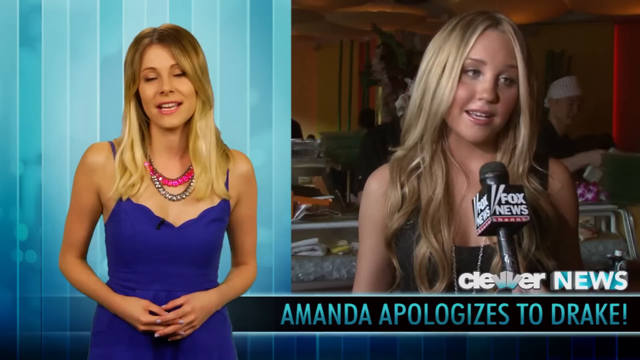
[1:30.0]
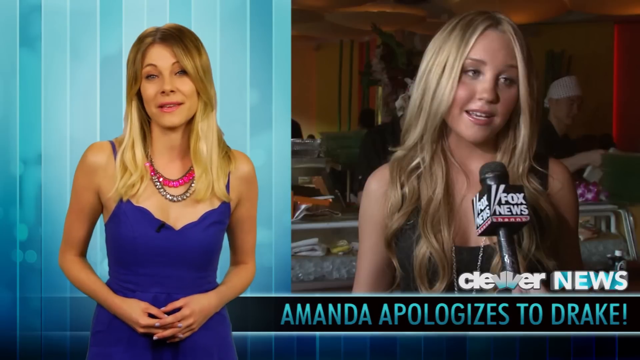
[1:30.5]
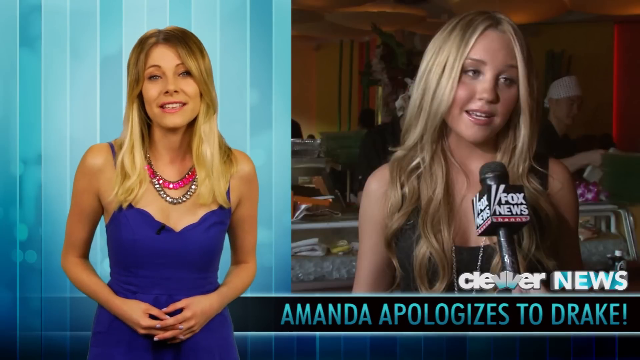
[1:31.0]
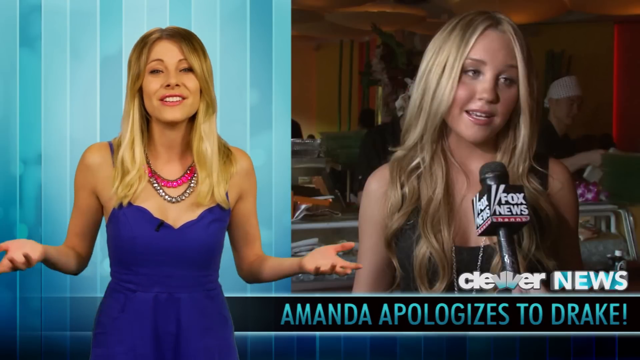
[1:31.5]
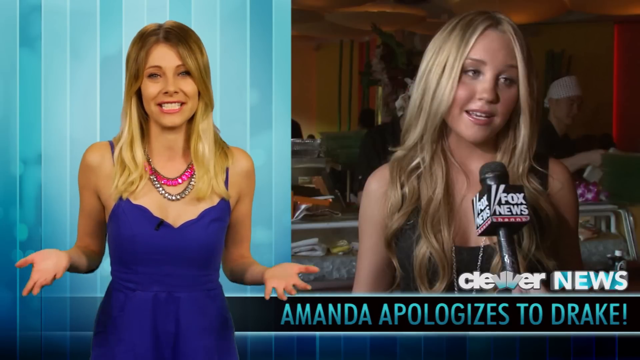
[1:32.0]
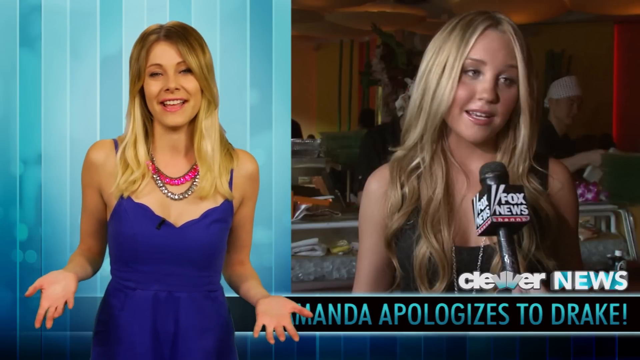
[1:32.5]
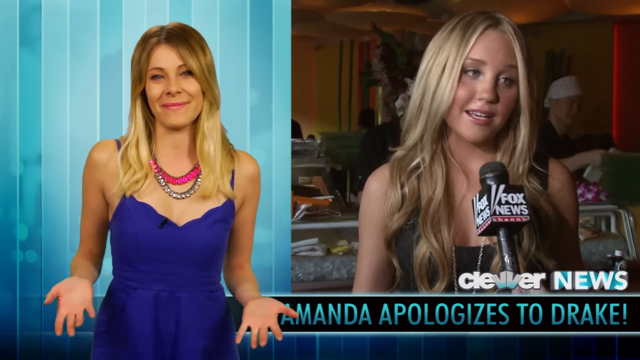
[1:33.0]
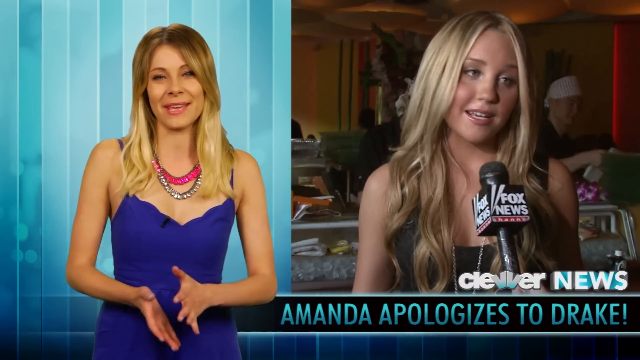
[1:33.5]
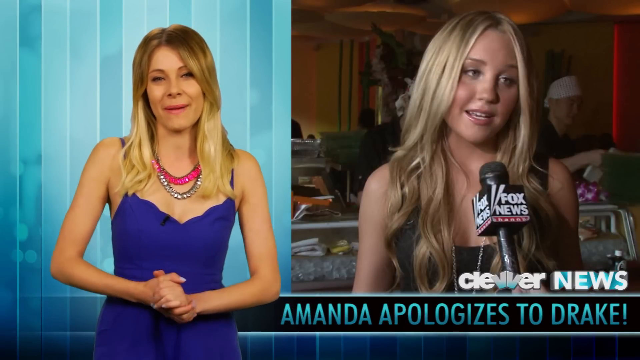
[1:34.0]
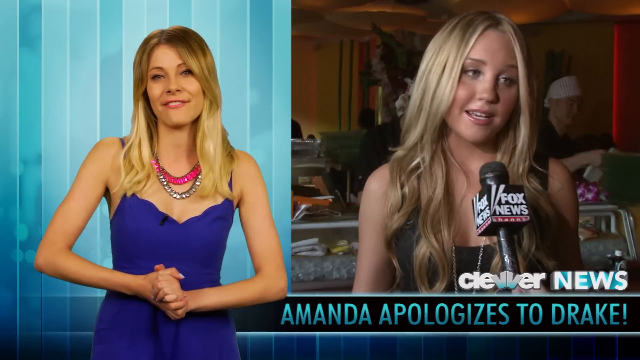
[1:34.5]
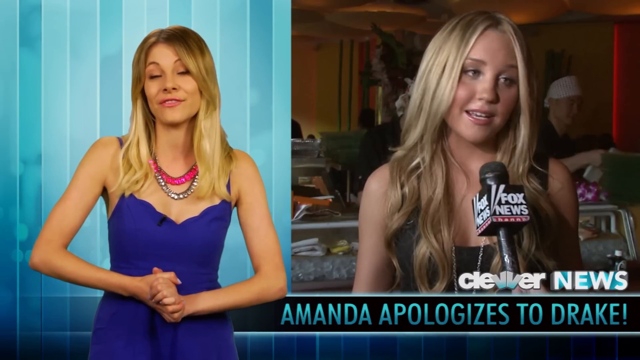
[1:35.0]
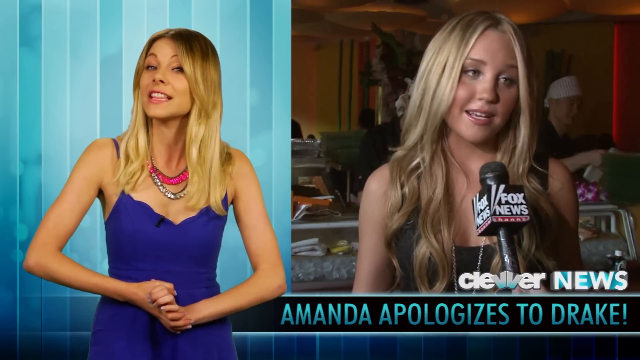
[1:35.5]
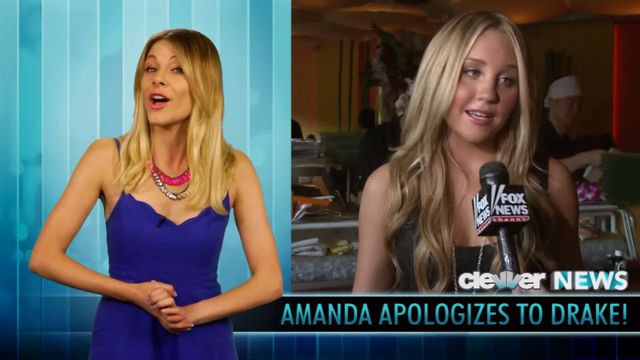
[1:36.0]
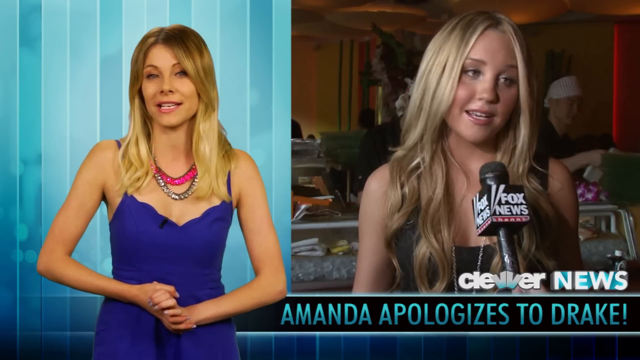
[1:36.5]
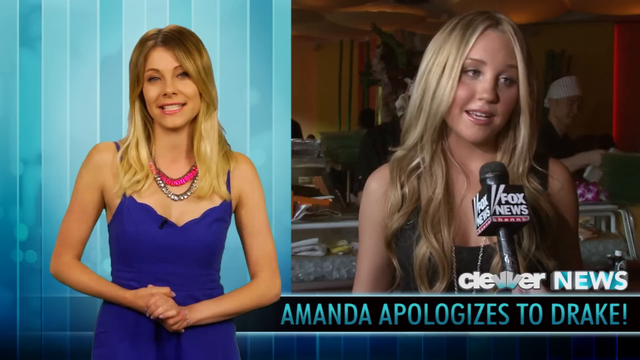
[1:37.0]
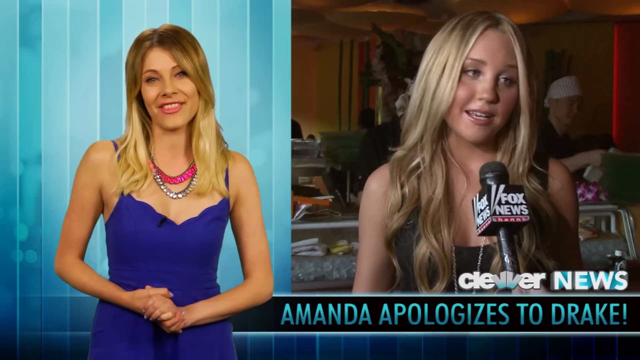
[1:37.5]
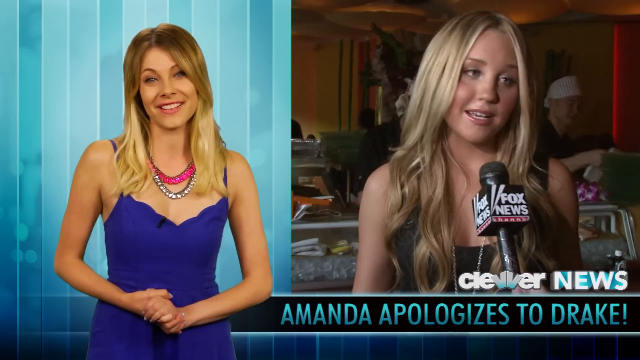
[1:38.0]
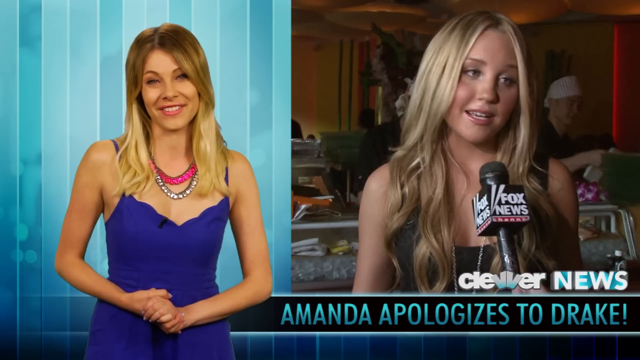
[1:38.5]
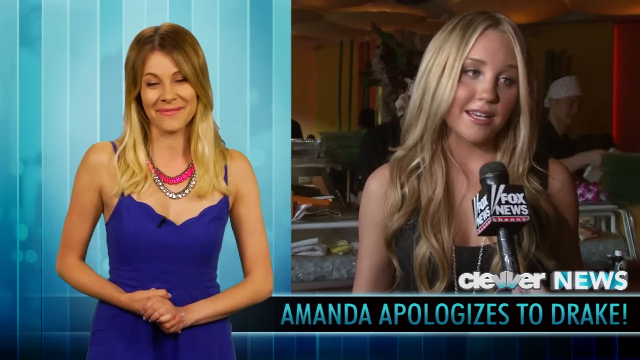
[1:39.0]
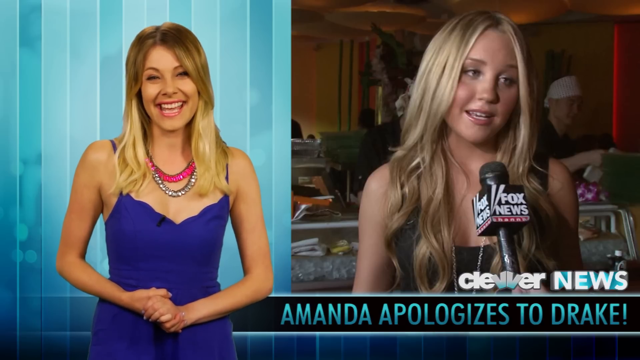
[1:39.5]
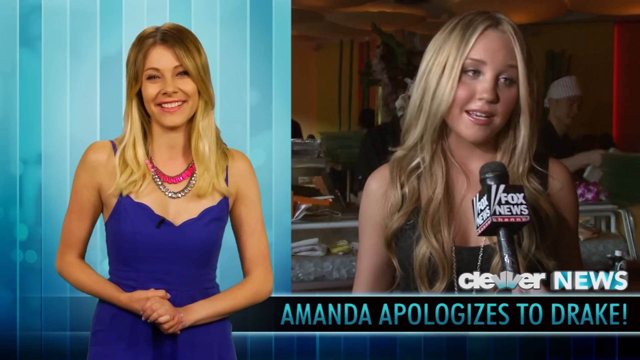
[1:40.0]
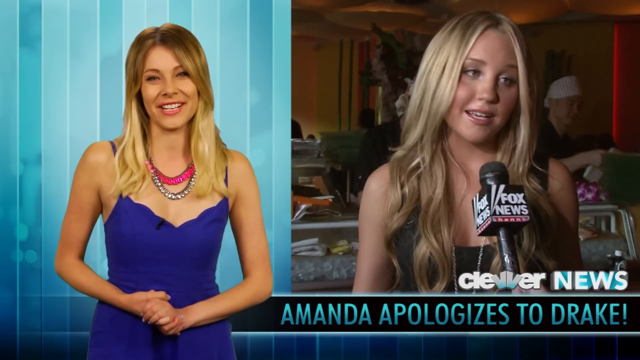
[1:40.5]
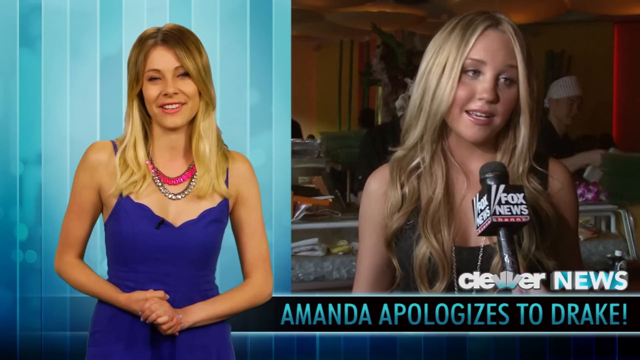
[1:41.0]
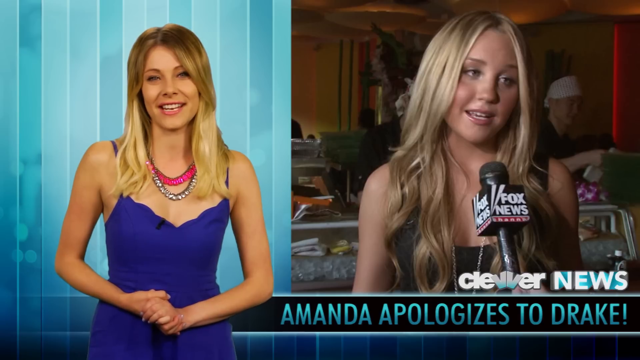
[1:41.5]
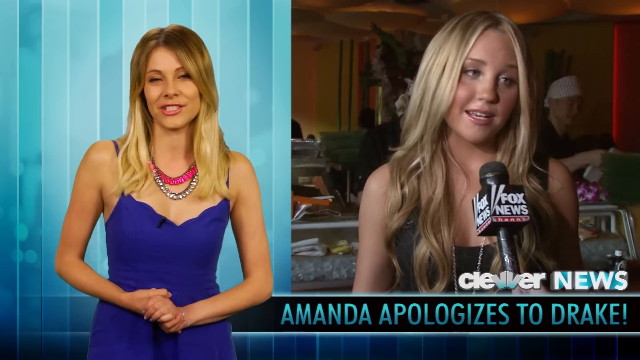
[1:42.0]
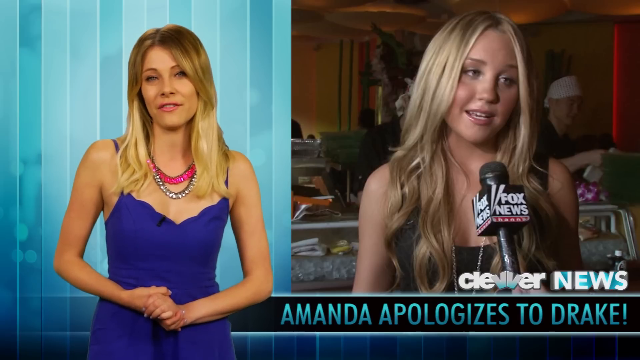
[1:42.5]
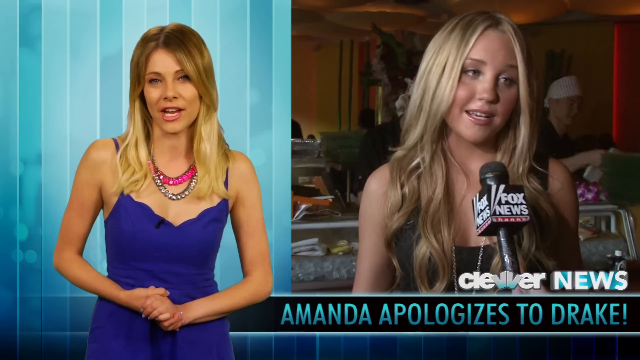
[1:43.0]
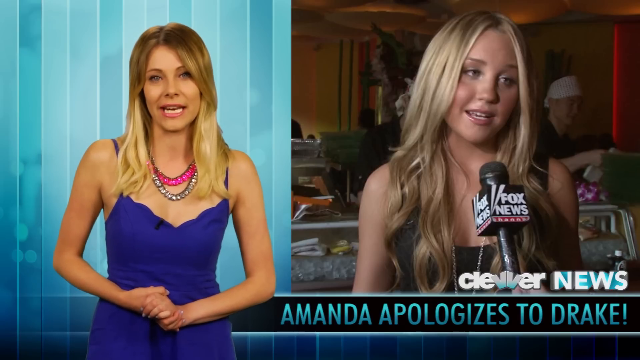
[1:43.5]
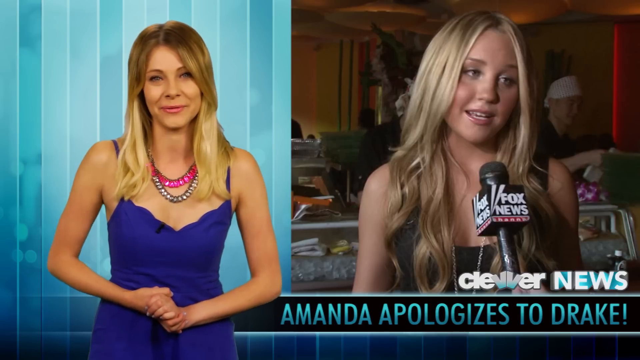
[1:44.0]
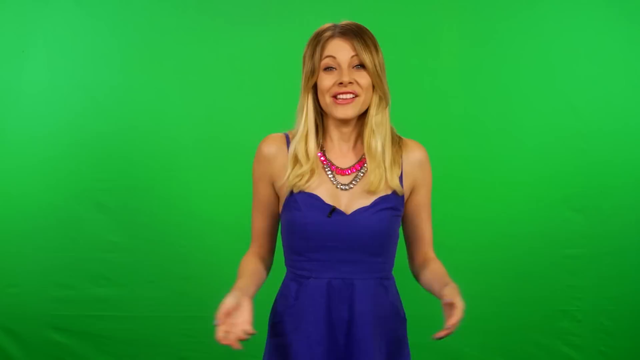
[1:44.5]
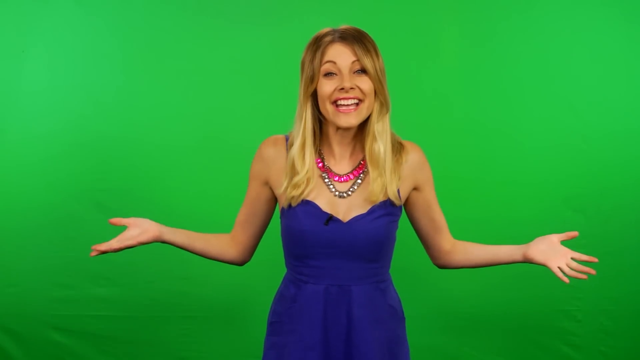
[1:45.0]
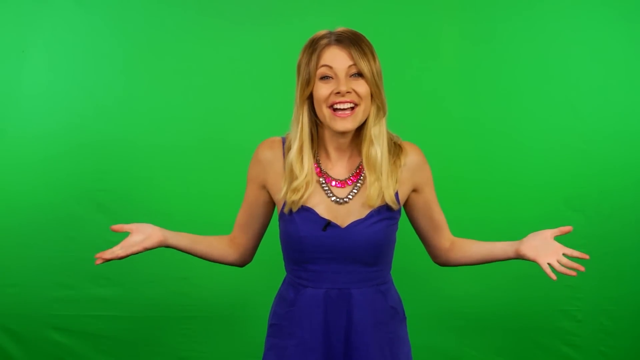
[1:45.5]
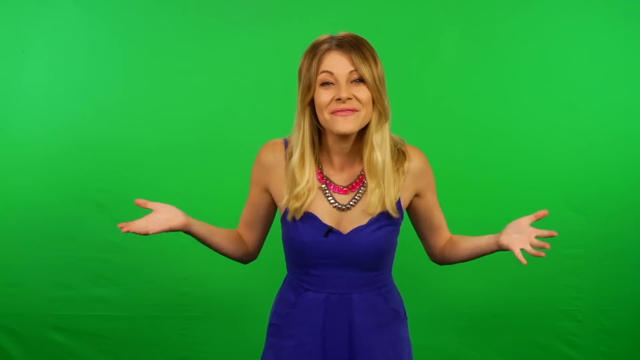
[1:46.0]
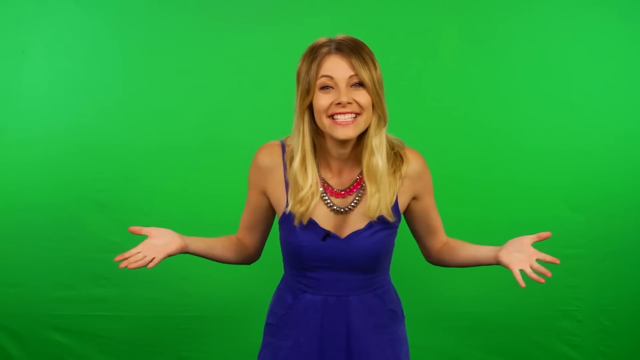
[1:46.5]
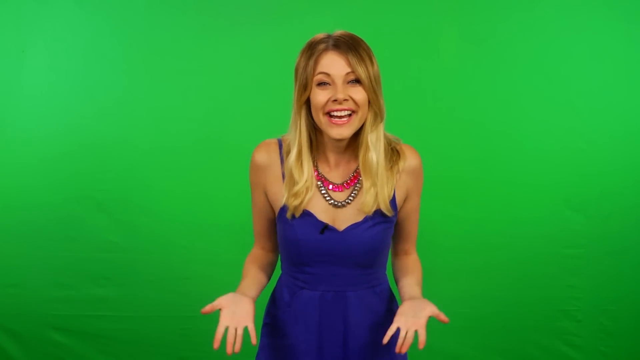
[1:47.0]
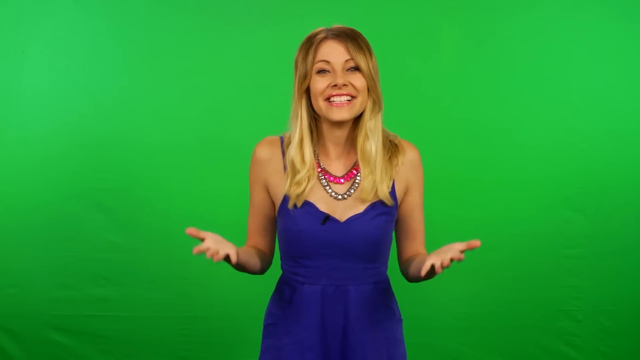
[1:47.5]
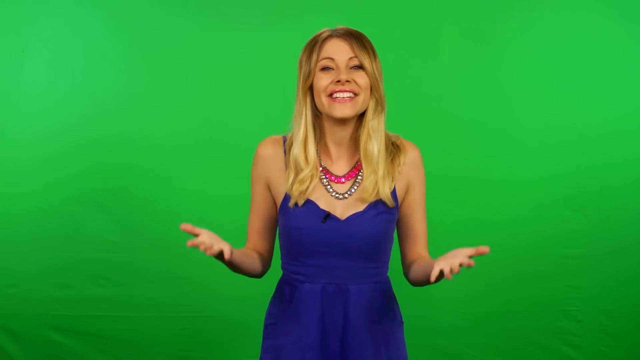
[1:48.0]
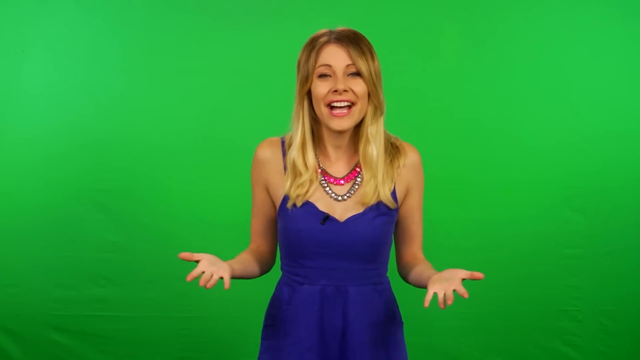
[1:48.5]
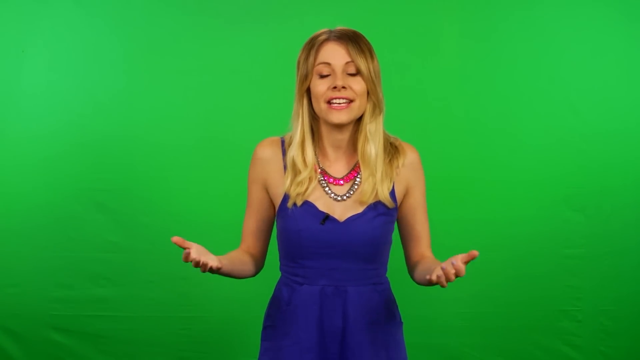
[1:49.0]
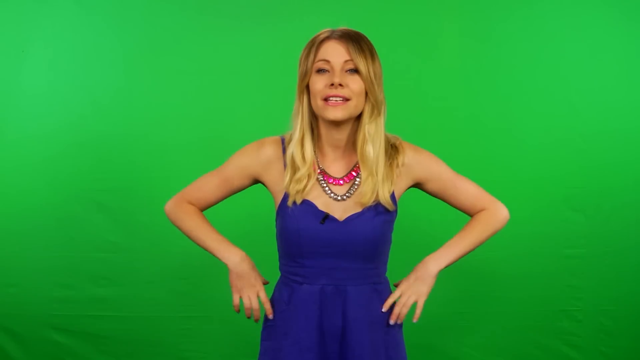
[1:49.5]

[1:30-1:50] Amanda Bynes is shown with the text "Amanda apologizes to Drake," reported by Clever News. The lady on the left wears a blue dress and has blonde hair, and is very skinny and lean; she apparently hosts the show Clever News as a reporter. She is talking for most of the shot. Then a close-up shows the lady in the blue dress talking and smiling against a green background. She is very expressive and has her hands on her hips.